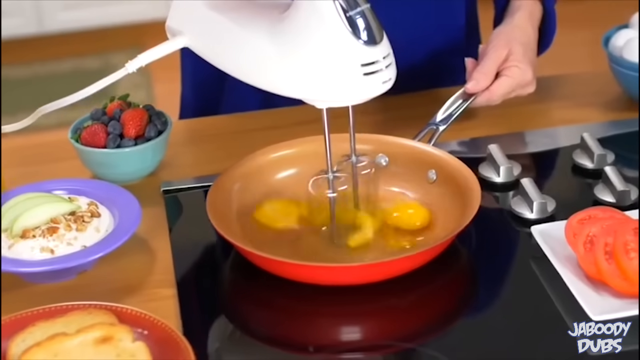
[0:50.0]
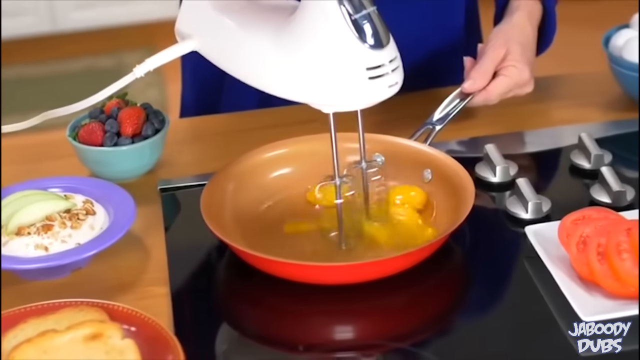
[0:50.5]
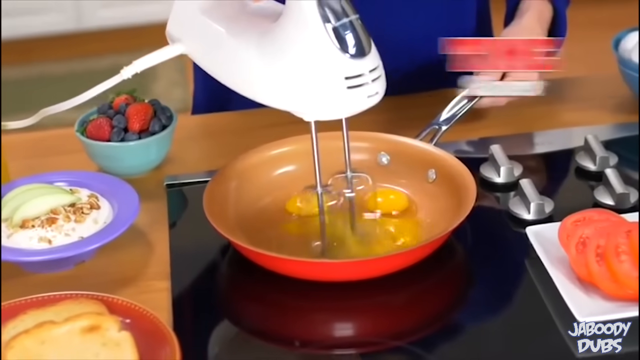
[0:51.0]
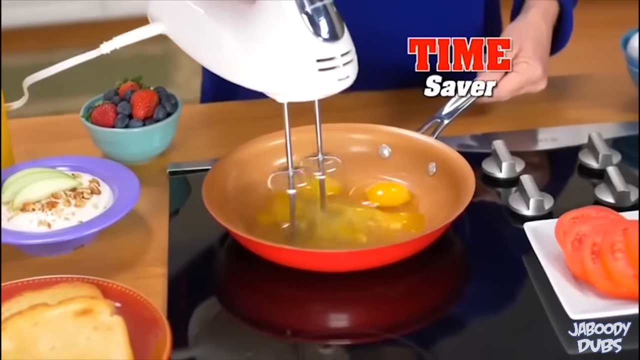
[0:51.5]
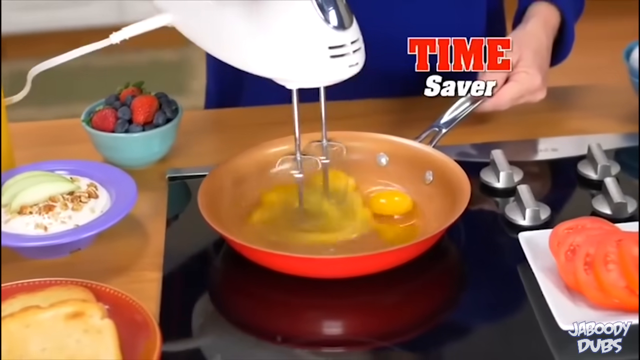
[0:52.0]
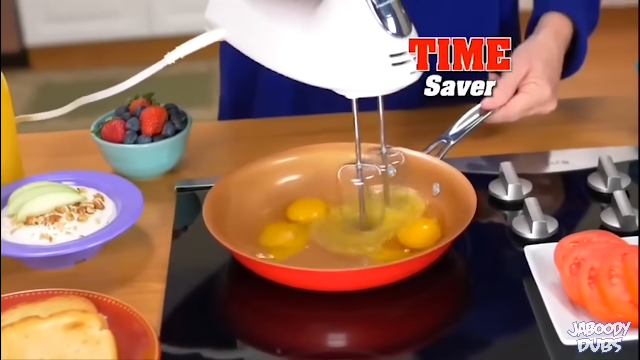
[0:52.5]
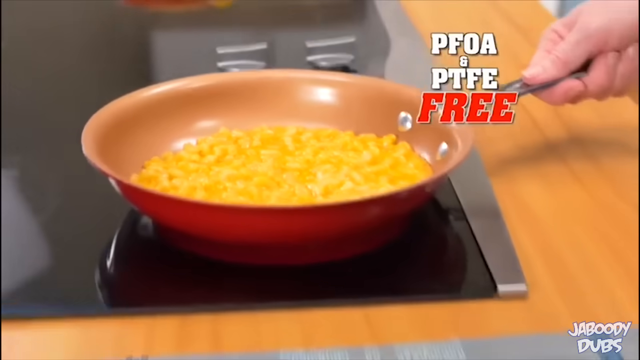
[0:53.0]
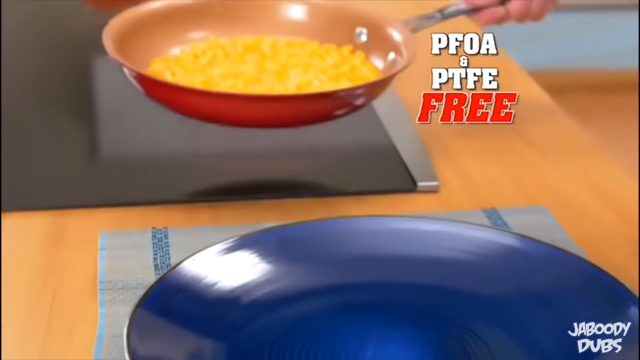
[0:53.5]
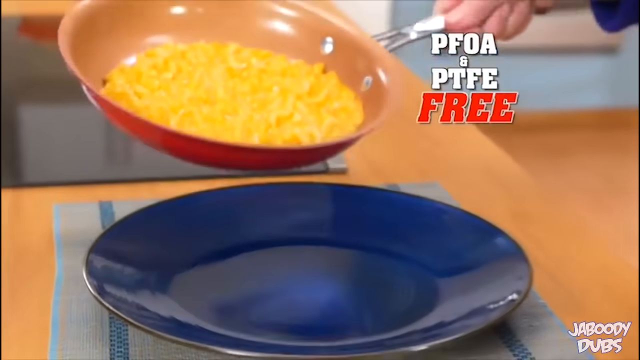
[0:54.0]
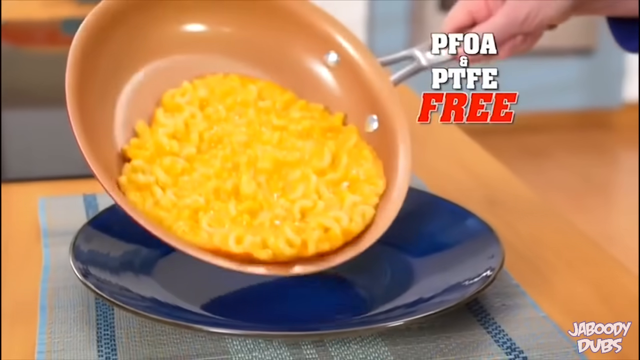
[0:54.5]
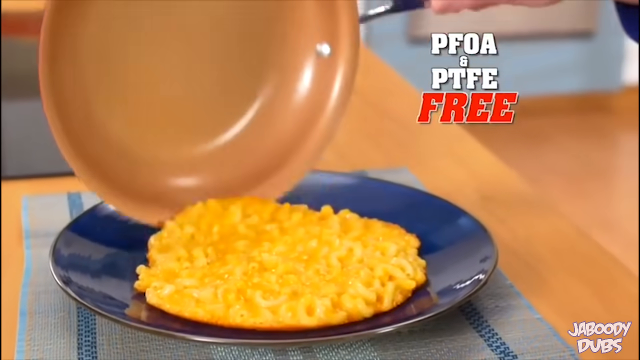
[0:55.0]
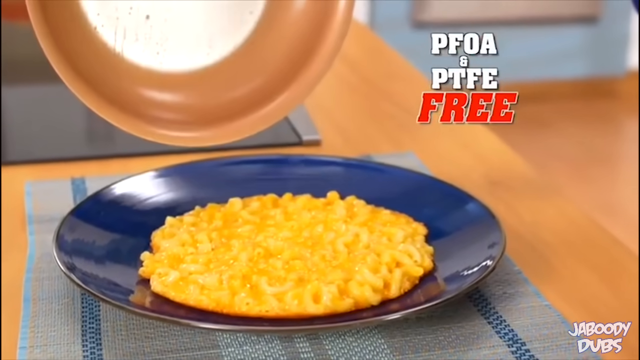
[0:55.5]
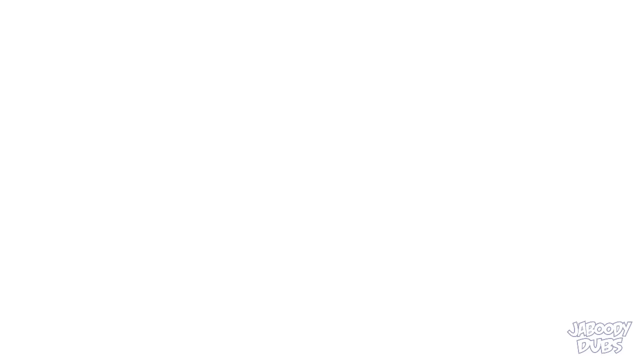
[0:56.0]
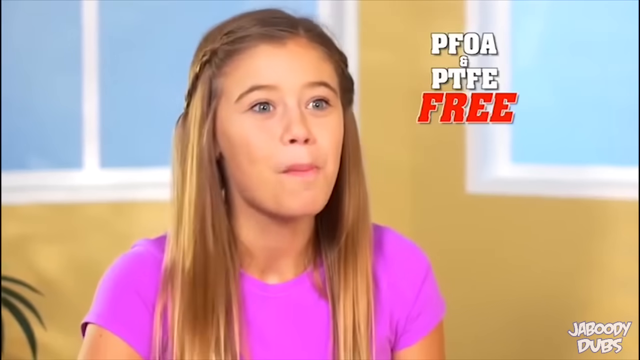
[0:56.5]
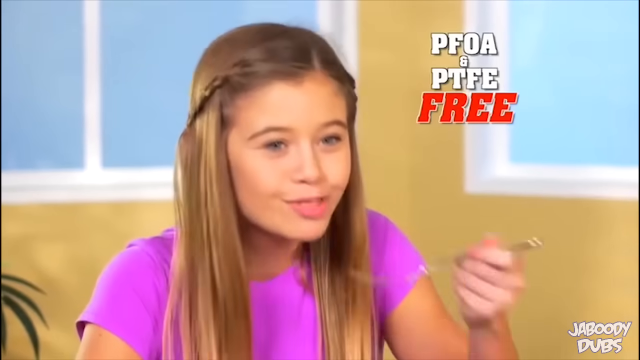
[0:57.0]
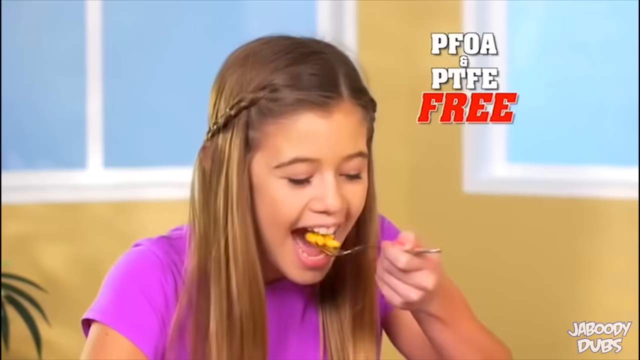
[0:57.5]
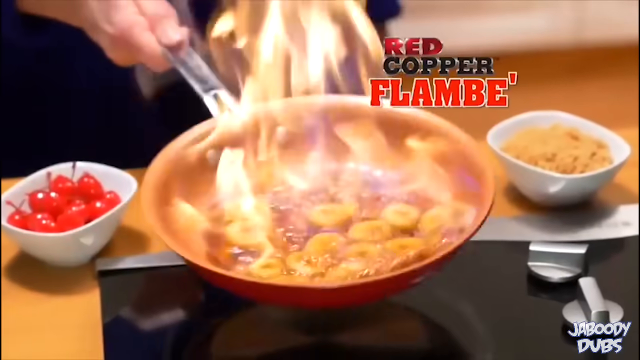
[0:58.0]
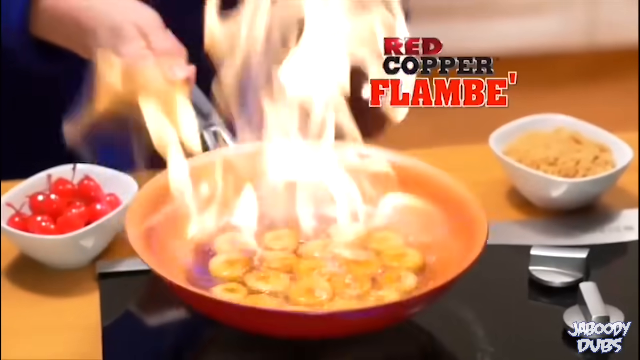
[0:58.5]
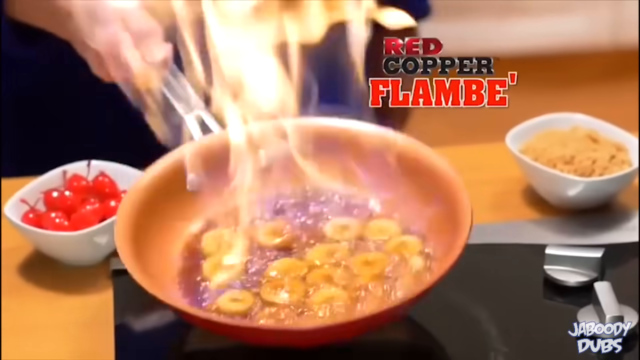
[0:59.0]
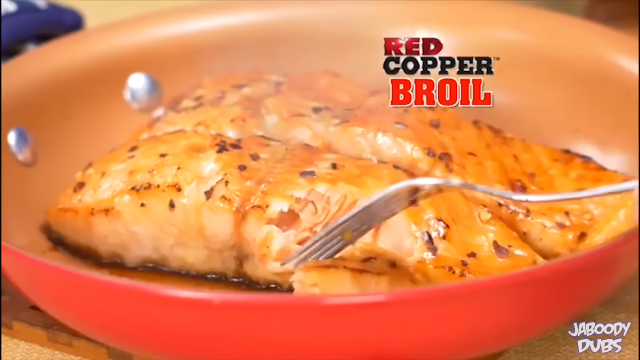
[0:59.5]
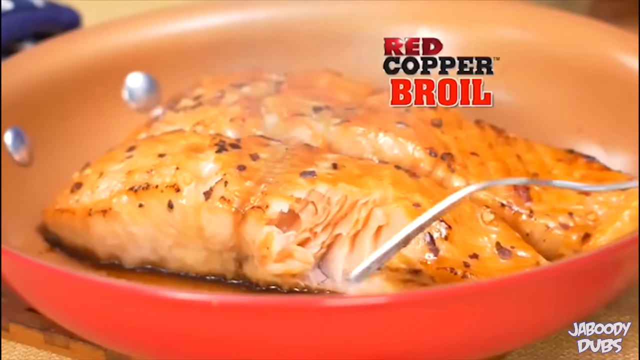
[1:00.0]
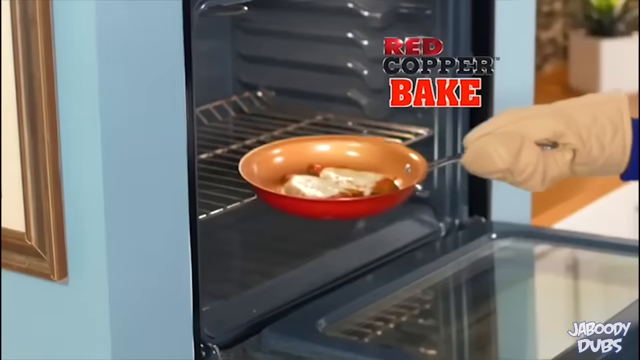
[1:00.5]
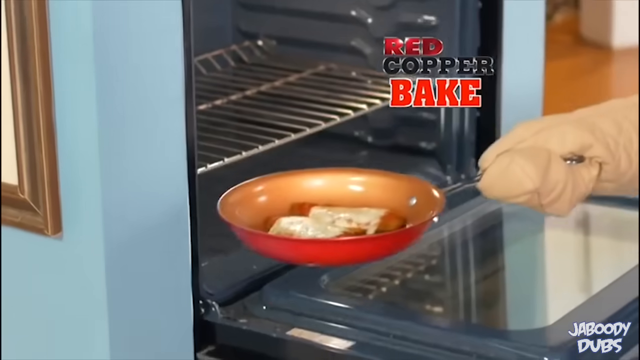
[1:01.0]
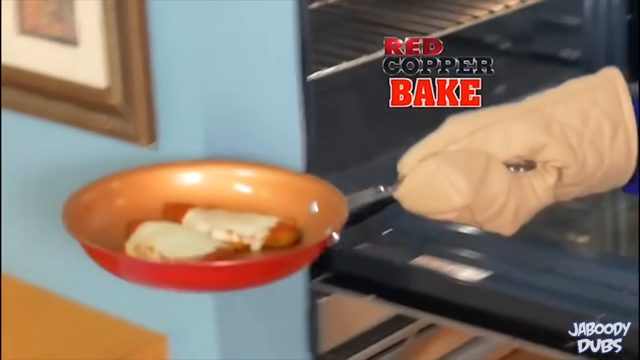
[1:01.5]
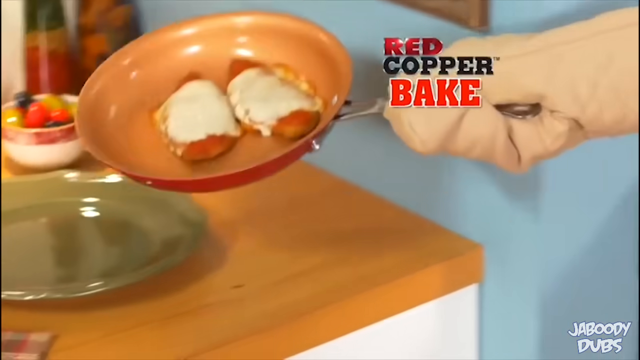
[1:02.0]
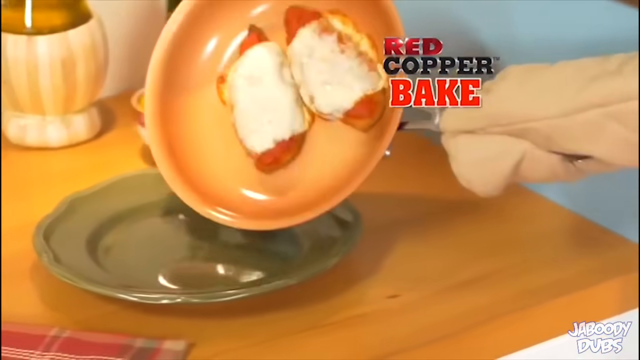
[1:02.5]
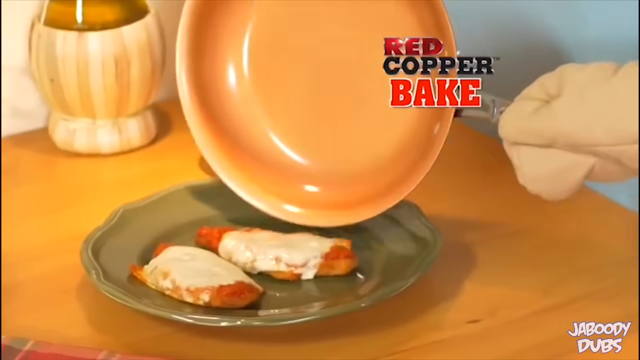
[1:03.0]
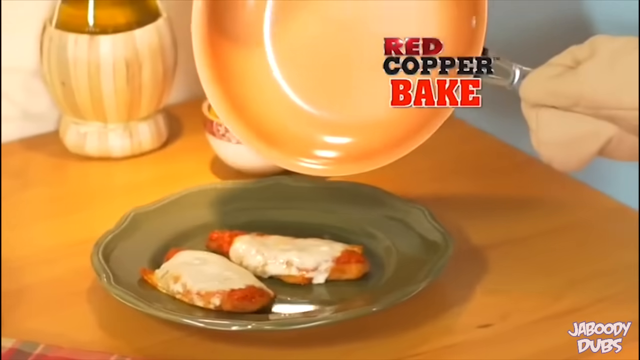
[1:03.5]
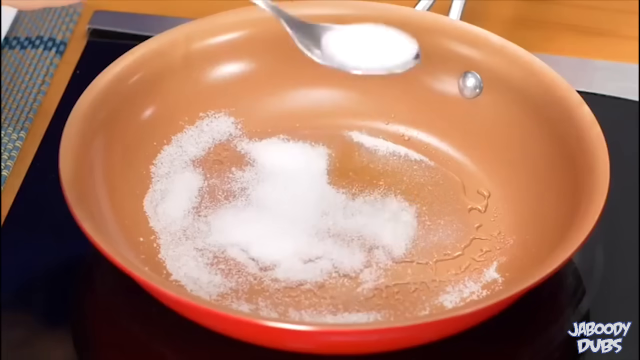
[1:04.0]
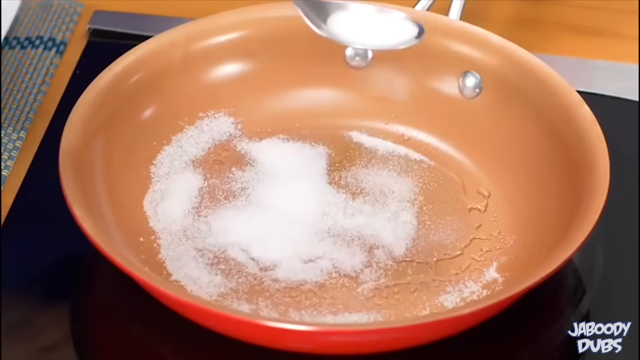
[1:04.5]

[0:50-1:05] A person has eggs in a skillet and scrambles them with an egg beater. What look like banana slices in the skillet are lit, probably with some sort of alcohol, and flames come up. A skillet comes out of an oven, and someone holds a skillet with oven mitts. A little girl eats some of the dishes made with the skillet. On-screen text reads "PFOA free", "red copper flame" and "red copper baking", and says it saves time. Chicken is made in it, with what looks like some kind of cheese covering a piece of chicken, along with some kind of omelette and fish. Food slides right off the skillet and lands on a plate while a little girl eats it.